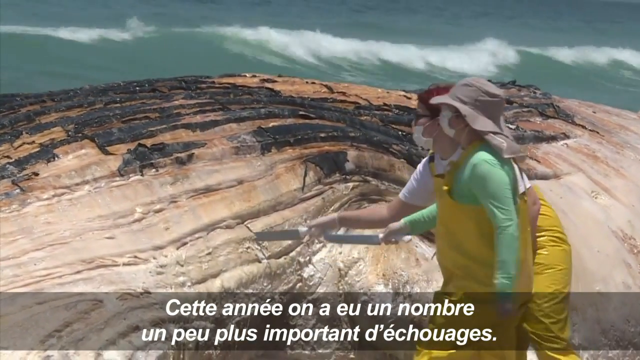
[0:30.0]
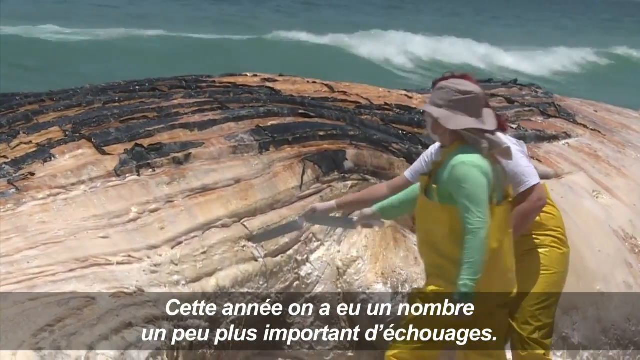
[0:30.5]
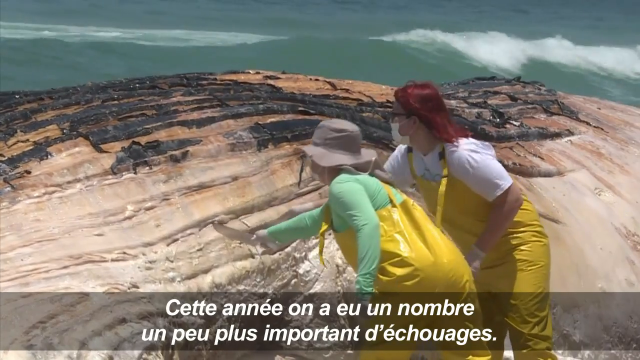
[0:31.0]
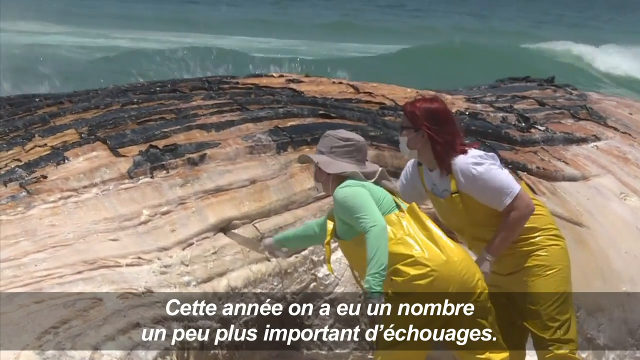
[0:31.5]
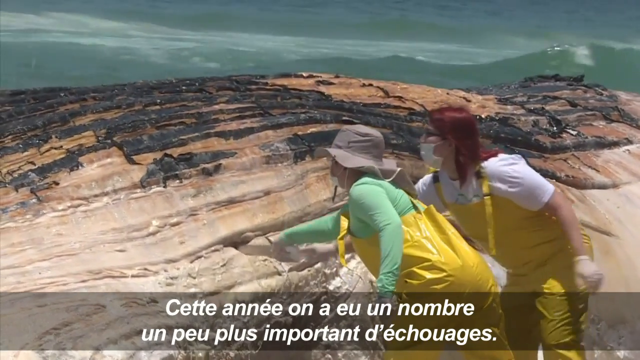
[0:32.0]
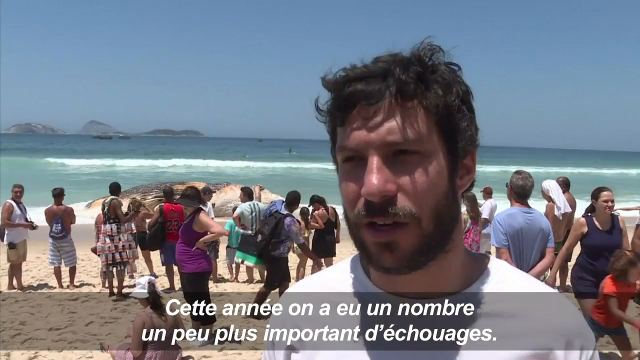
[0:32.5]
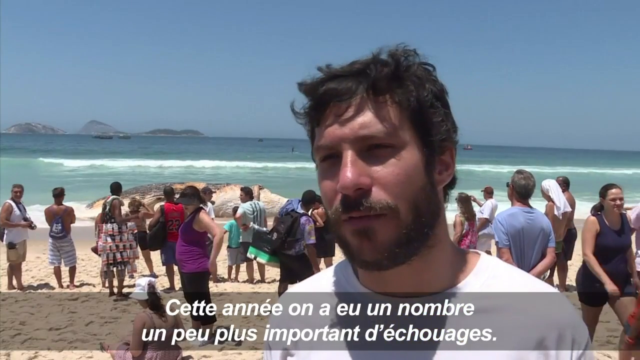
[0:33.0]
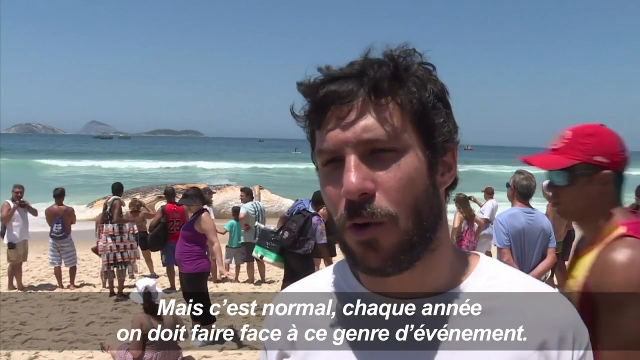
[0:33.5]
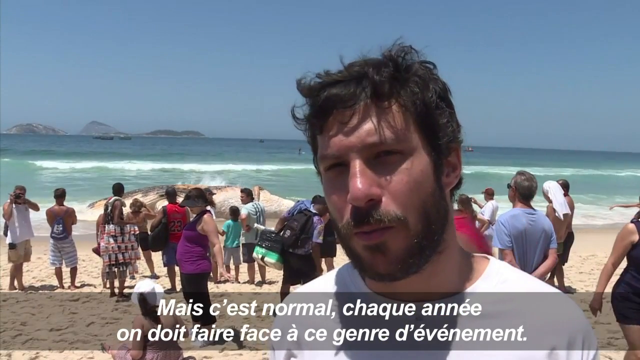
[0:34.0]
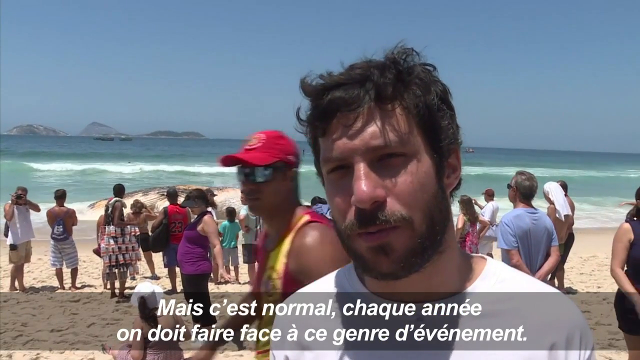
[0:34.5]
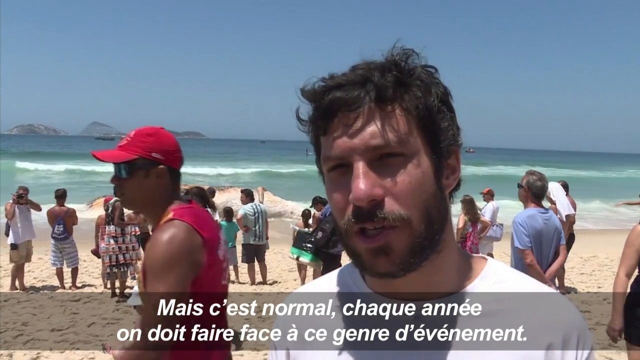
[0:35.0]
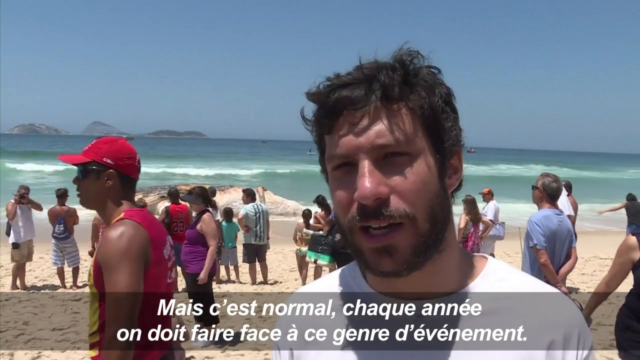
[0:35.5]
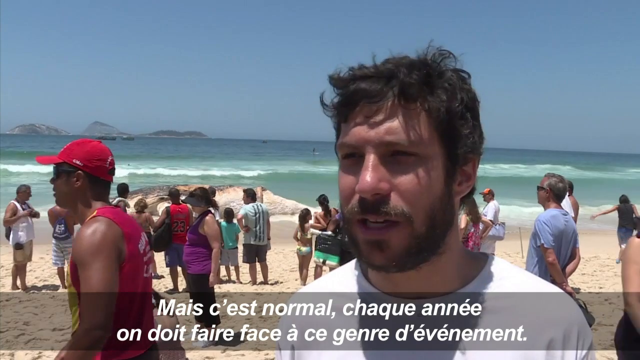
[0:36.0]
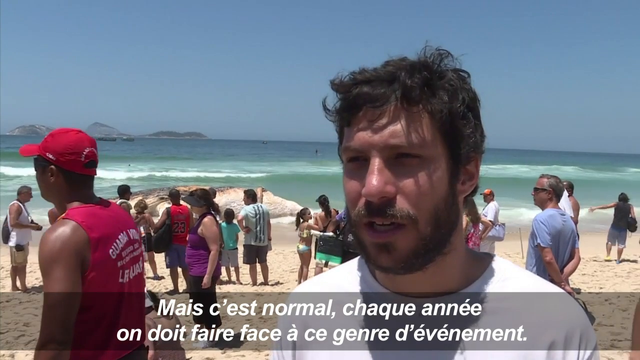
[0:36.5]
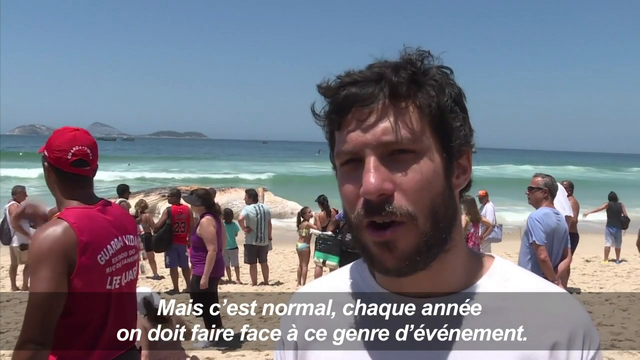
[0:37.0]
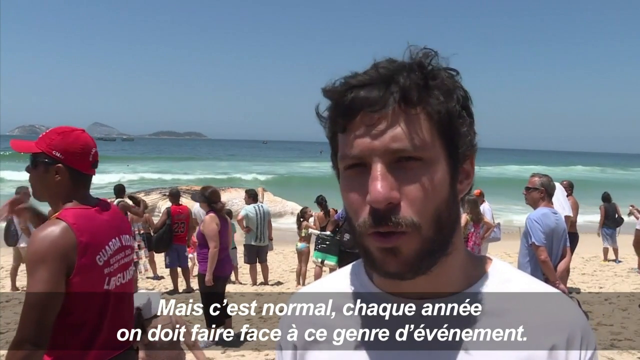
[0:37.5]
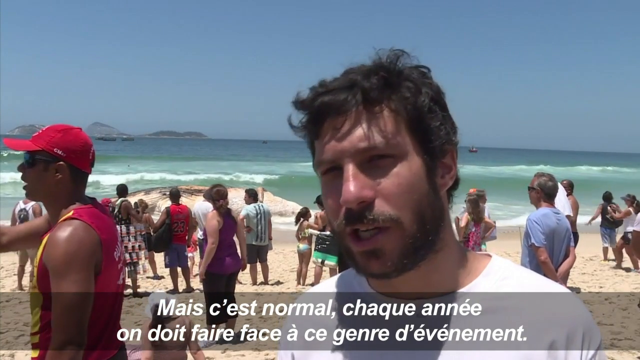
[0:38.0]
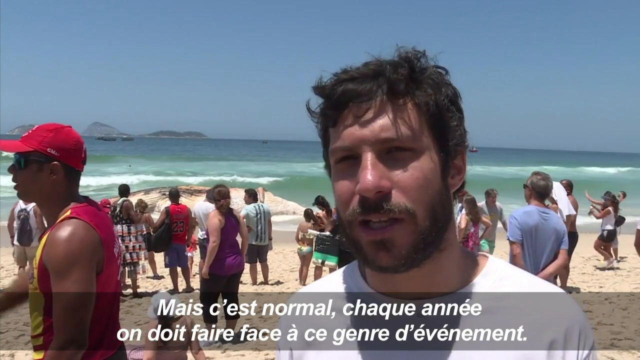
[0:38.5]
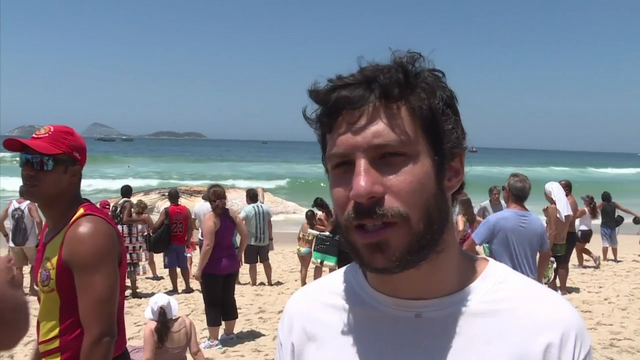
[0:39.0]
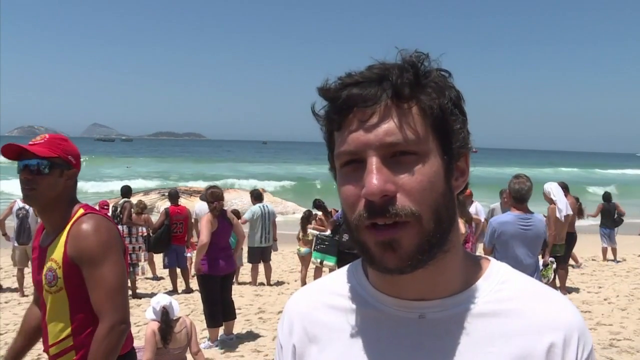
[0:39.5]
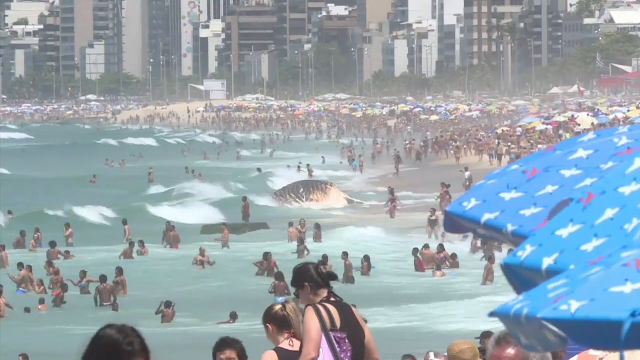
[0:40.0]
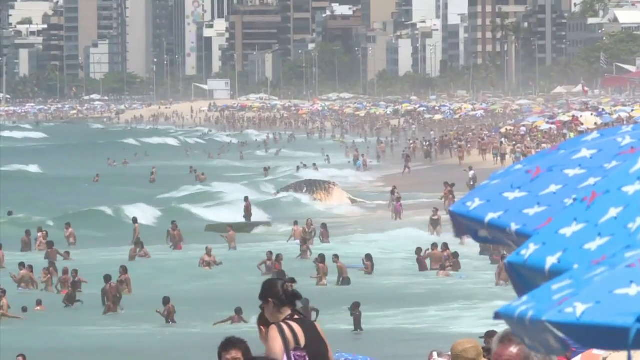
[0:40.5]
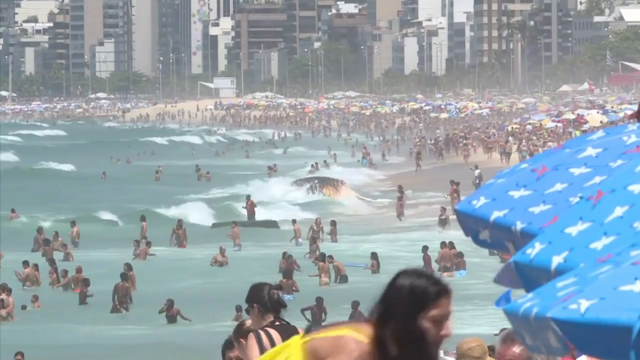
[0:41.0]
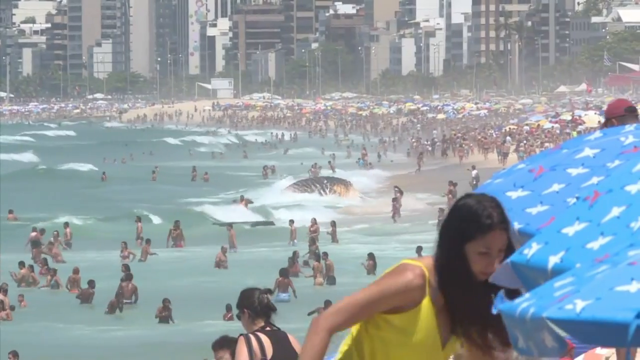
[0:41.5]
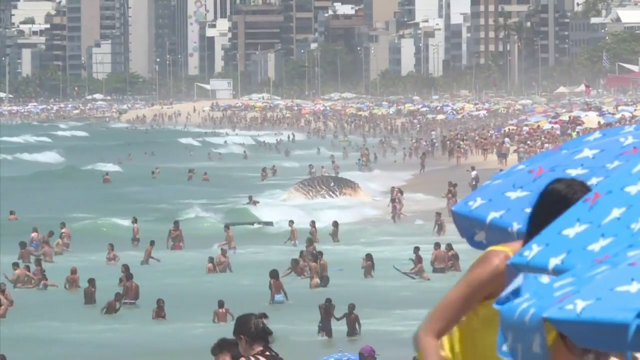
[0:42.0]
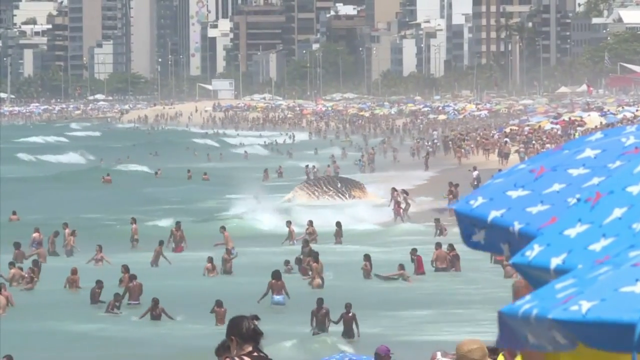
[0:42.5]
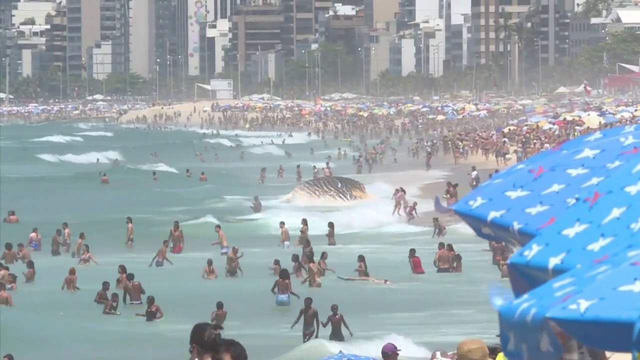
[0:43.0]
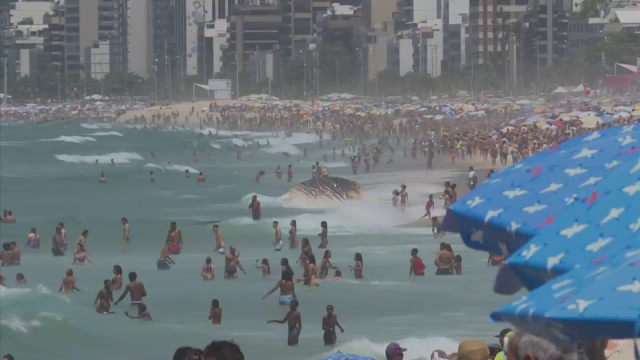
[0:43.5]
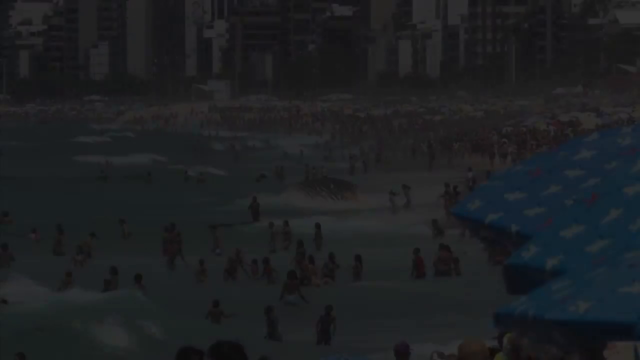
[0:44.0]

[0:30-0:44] Two women wearing yellow waders hold long knives and seem to be chopping into the body of a humpback whale that sits quietly along the shore of a beach, apparently in Brazil. In a different scene, a man wearing a white t-shirt is interviewed; behind him, a mass of perhaps 30 people are all looking at the white humpback whale washed up on the shore. Next, a bunch of people are playing on a very busy, crowded beach, with tall buildings in the background and a blue umbrella. After a transition, some women walk up.